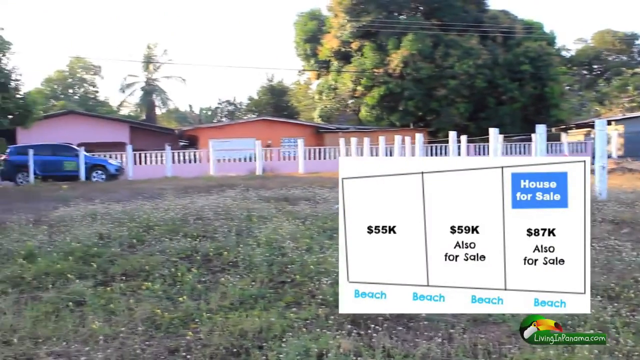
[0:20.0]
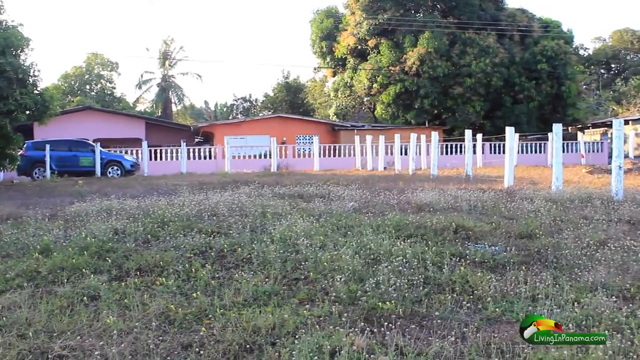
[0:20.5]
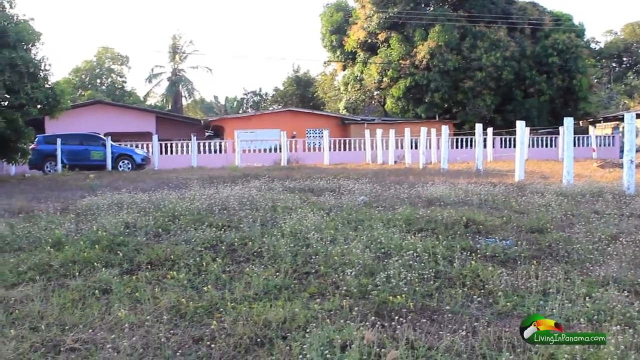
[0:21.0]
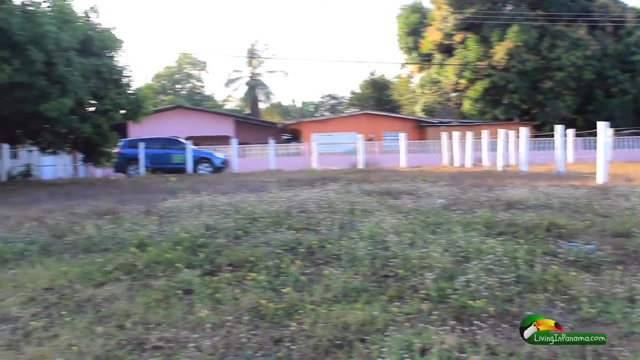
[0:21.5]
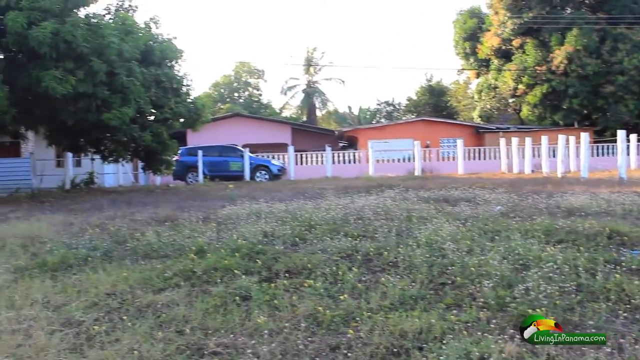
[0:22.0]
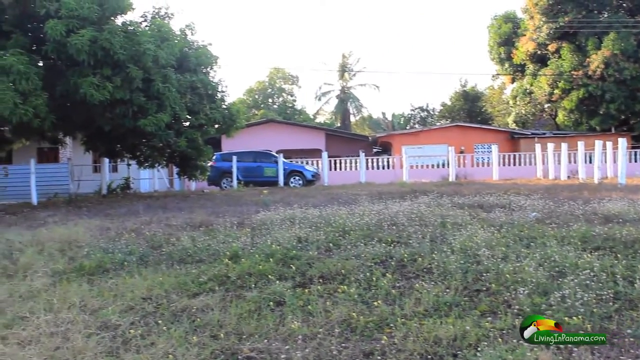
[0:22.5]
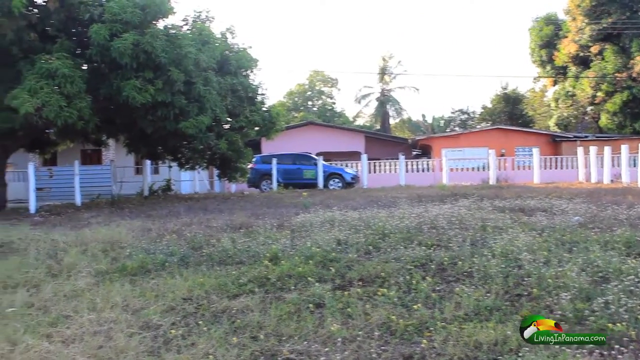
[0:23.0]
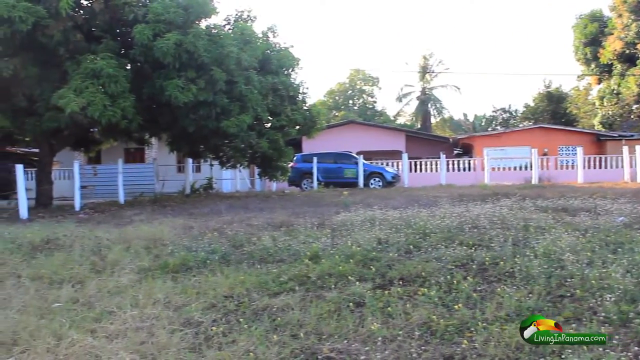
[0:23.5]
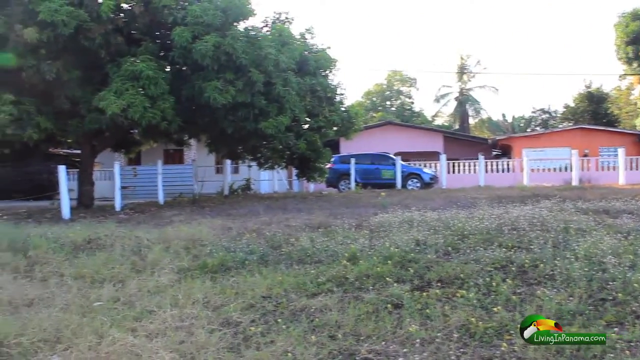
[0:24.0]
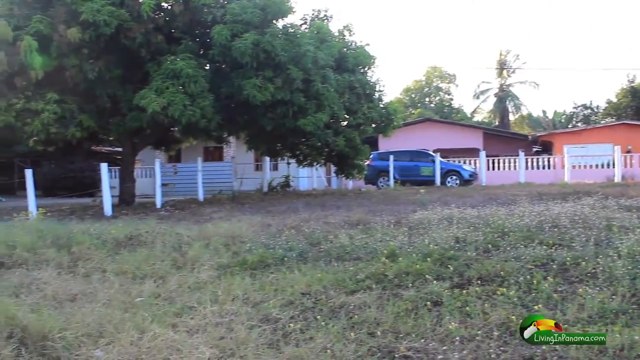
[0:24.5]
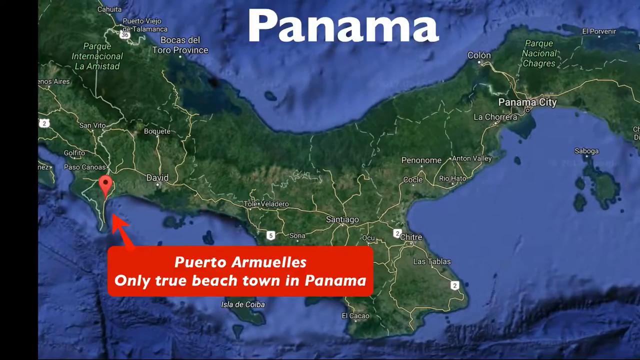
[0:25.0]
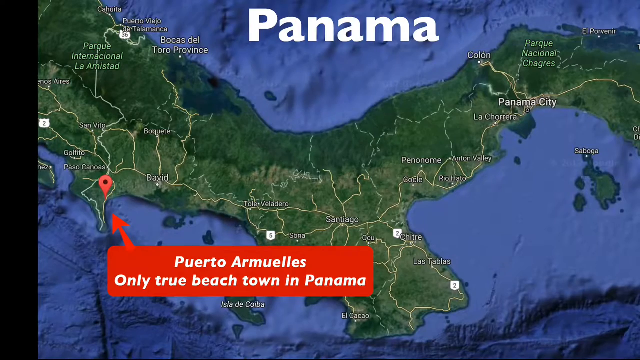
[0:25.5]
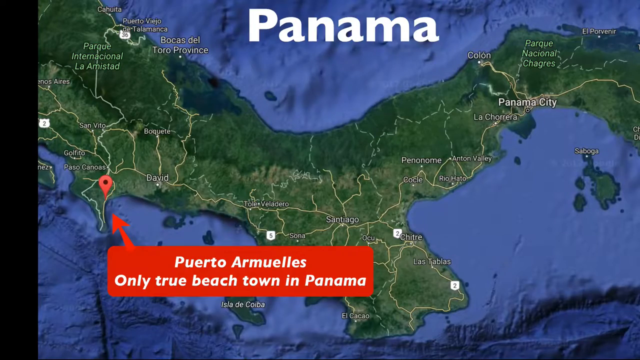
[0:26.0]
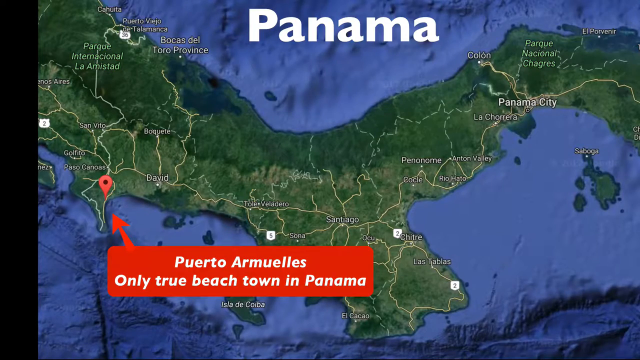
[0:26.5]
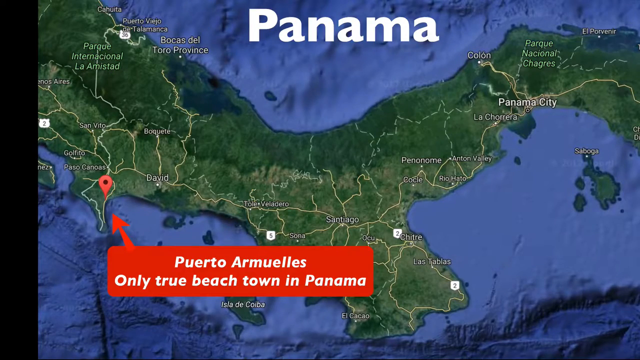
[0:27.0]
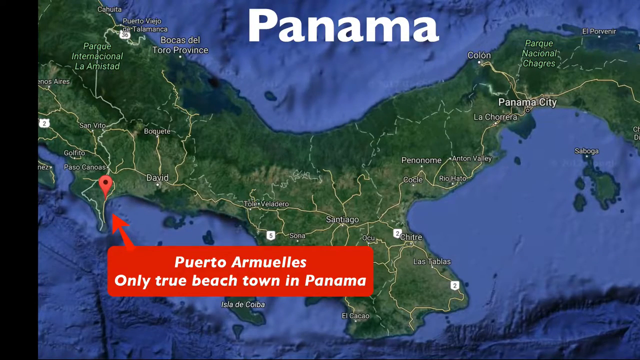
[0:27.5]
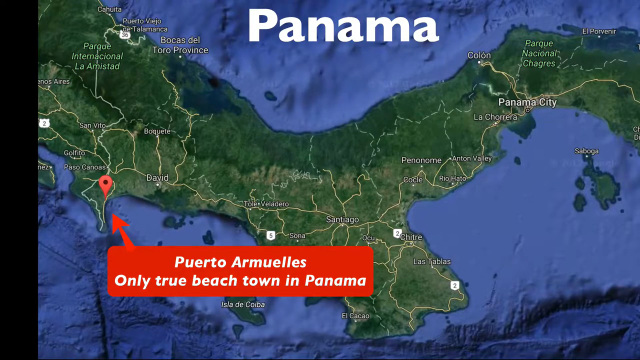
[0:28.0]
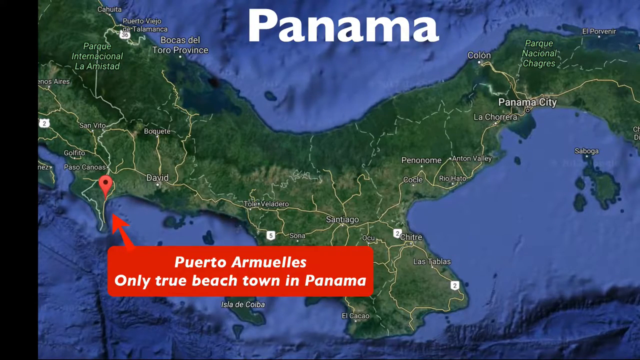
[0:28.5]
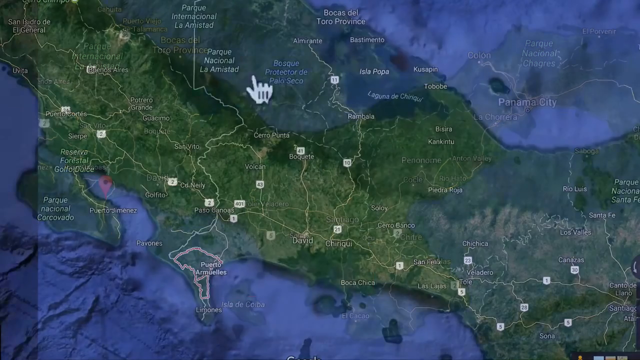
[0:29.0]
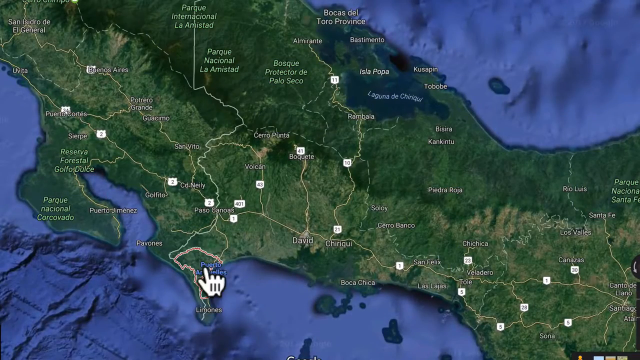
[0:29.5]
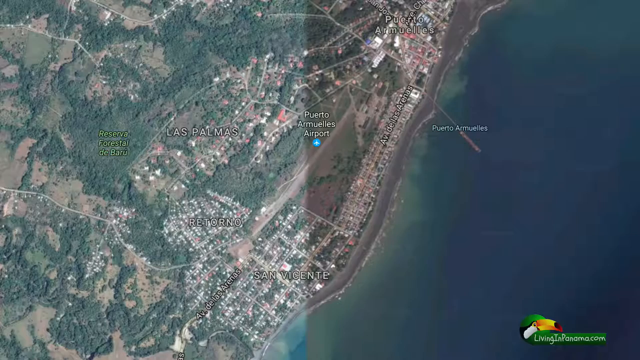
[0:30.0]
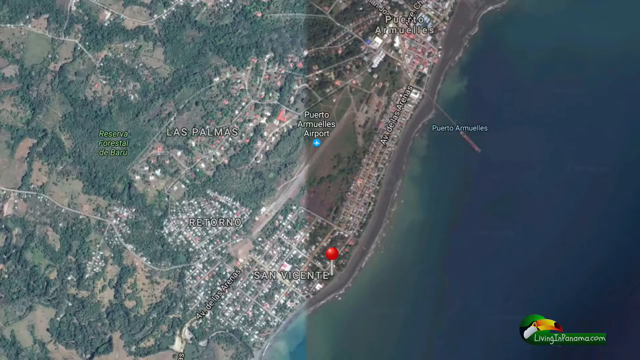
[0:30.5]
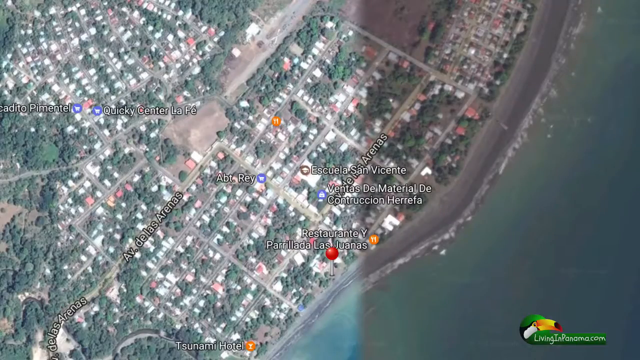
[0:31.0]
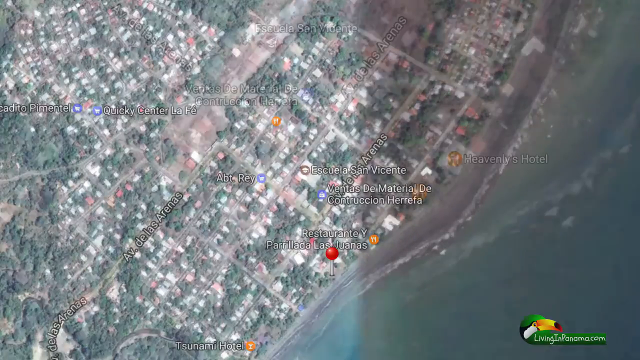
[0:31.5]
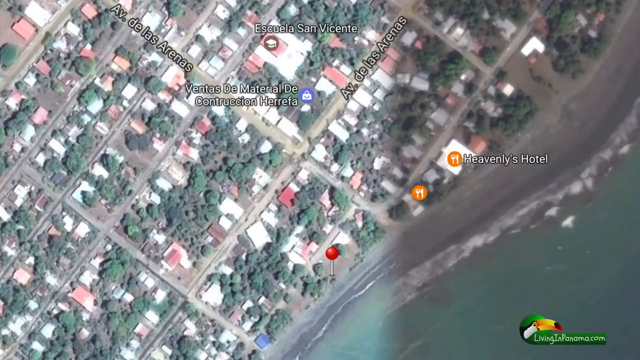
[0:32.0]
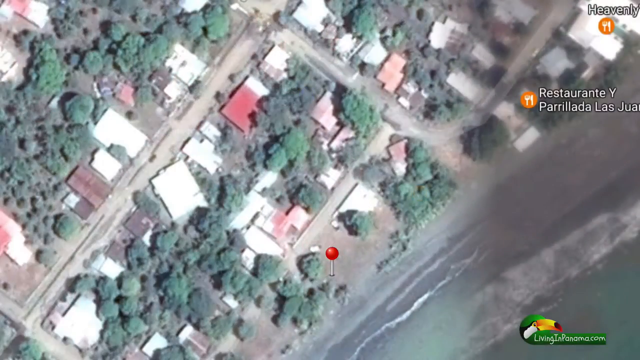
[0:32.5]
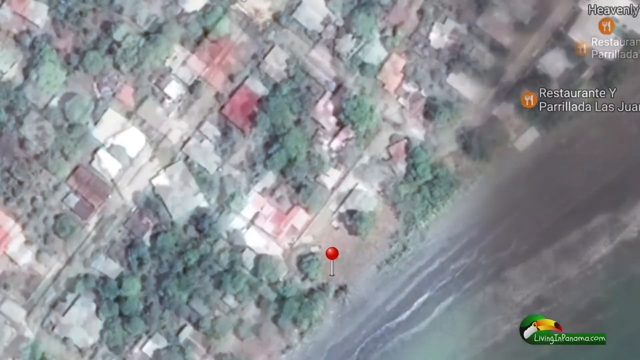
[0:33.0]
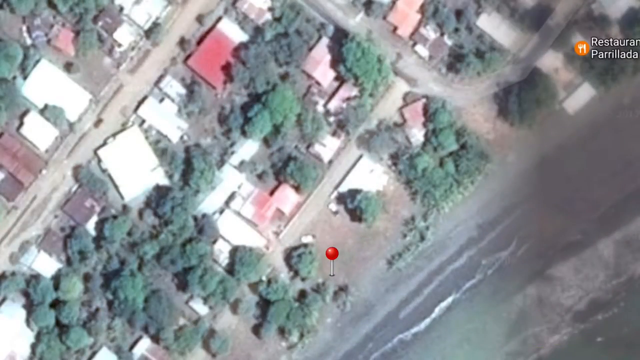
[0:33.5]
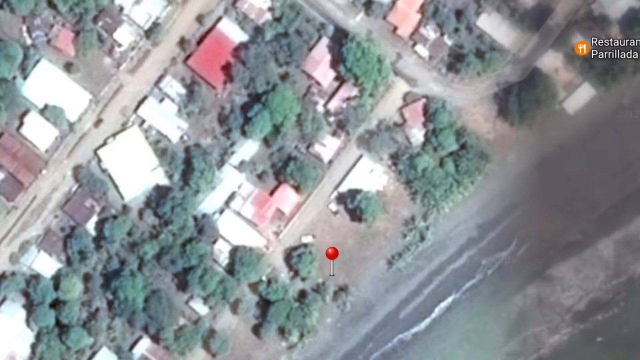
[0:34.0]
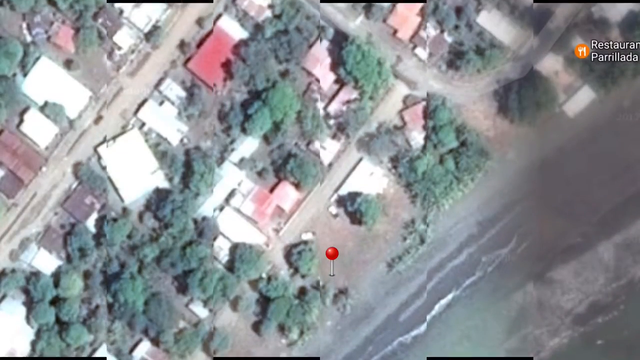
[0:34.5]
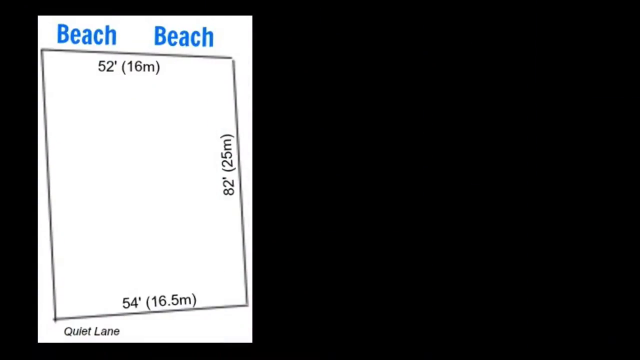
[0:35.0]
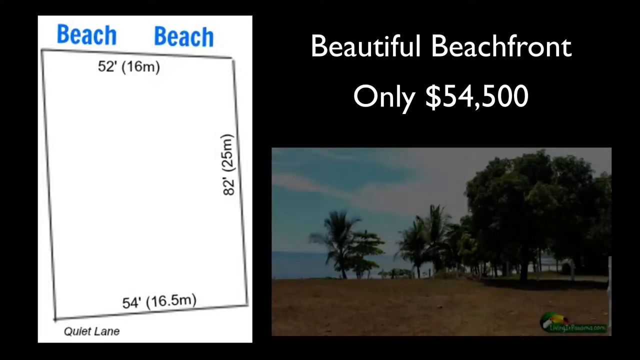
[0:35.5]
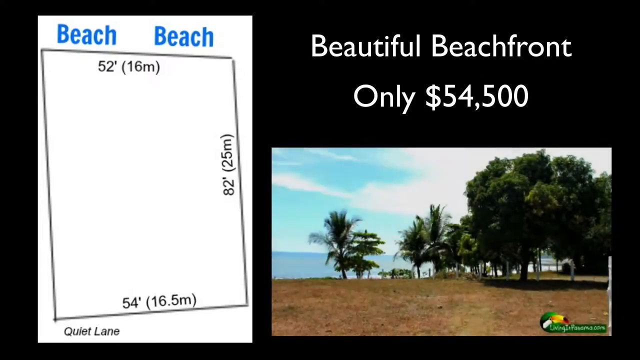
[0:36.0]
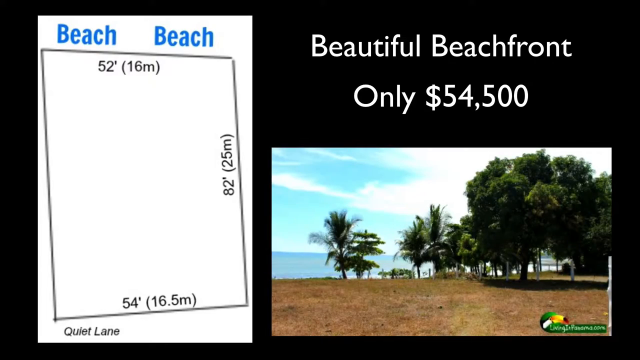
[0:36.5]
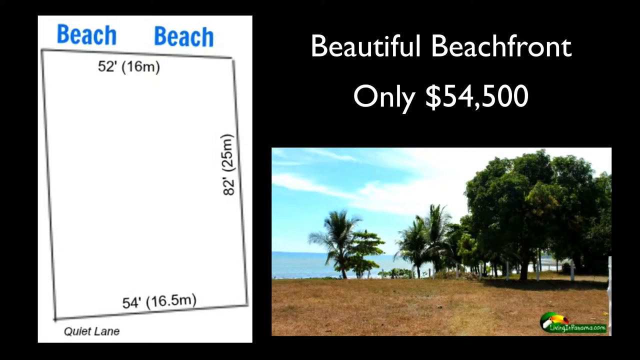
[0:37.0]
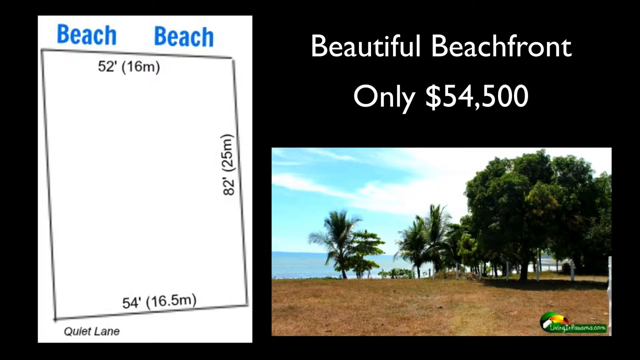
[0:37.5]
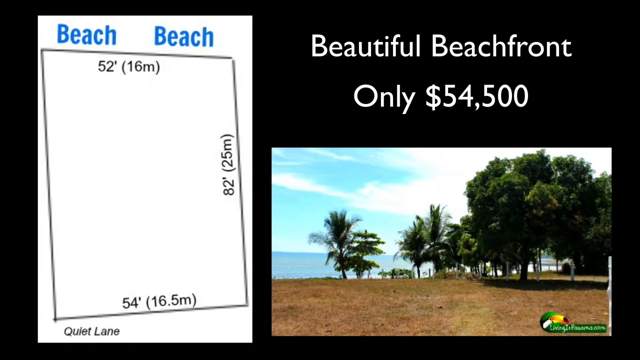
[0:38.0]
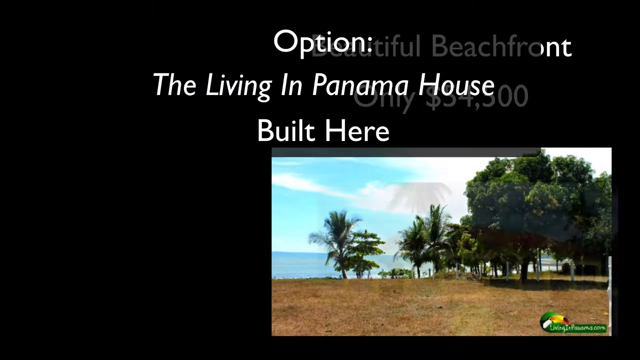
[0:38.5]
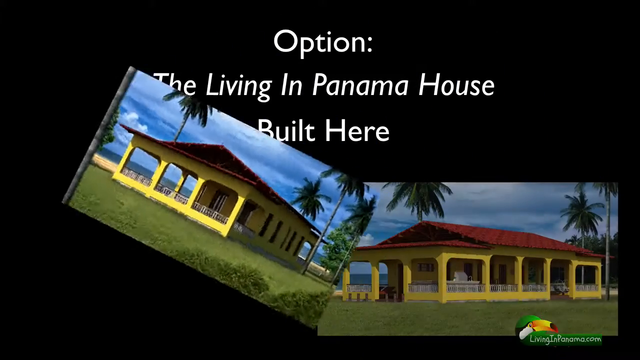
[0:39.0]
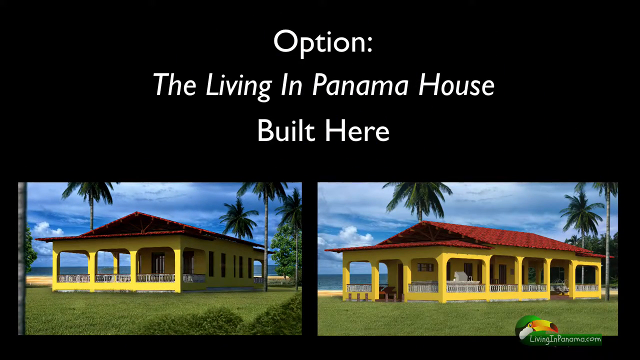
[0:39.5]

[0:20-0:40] A picture of an orange one-storey house appears, with lots of white posts between that house and another house, and greenery with white flowers in the front of the picture. On the right-hand side of the screen is a white rectangle containing a rectangle outline split into three. At the bottom of the picture it says "beach beach beach beach". From the left, the rectangles say "55k dollars", the middle one "59k dollars also for sale", and the one on the right "house for sale 87k dollars also for sale". A blue car is in front of a pink house on the left-hand side. The video cuts to a map of Panama with a little location tag on the left-hand side that says "Puerto Mules, only true beach town in Panama". The image zooms in on what looks like a Google Maps image with a pin on the side of the beach, getting closer and closer, and then shows an image of the beach on the right-hand side with "beautiful beach front only $54,500" above it, and a rectangle on the left-hand side with the measurements "52 foot by 82 feet by 54 feet".